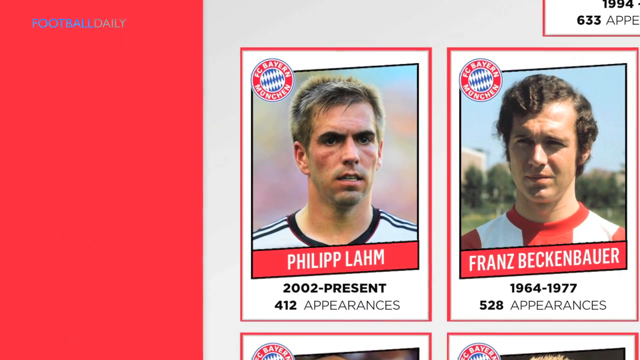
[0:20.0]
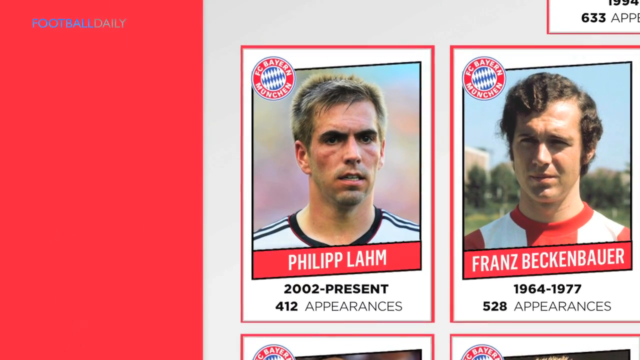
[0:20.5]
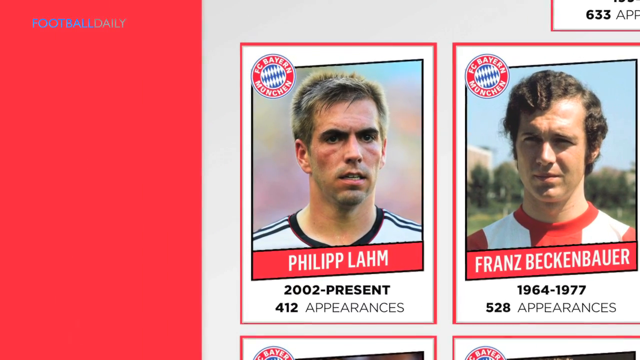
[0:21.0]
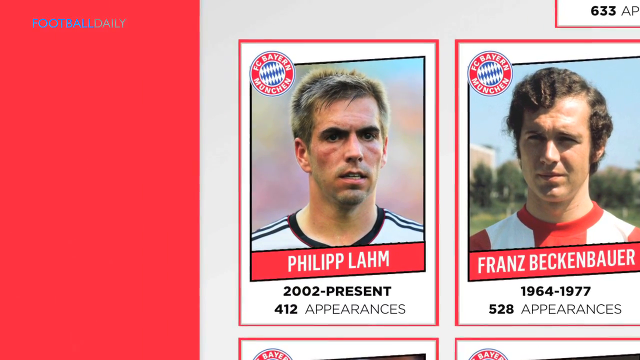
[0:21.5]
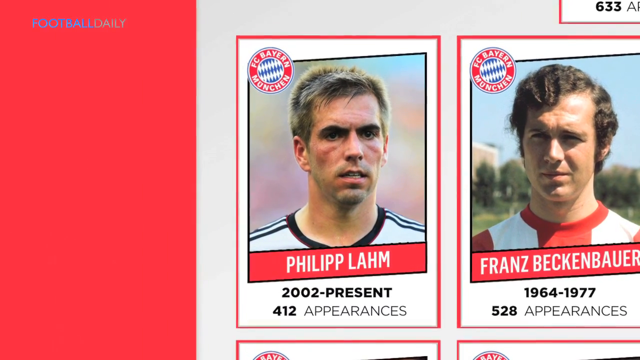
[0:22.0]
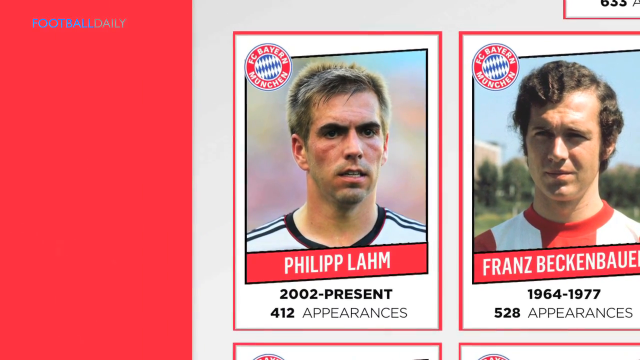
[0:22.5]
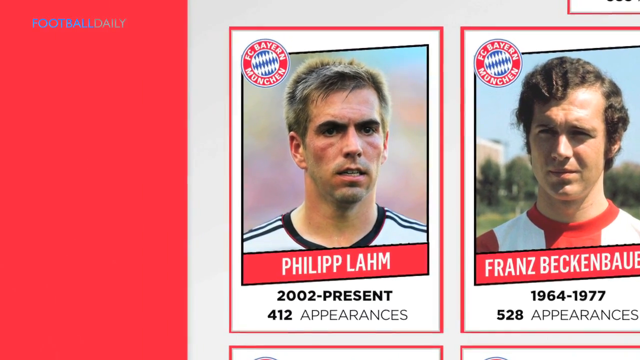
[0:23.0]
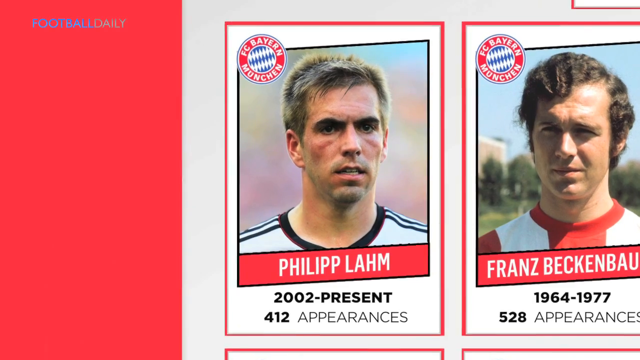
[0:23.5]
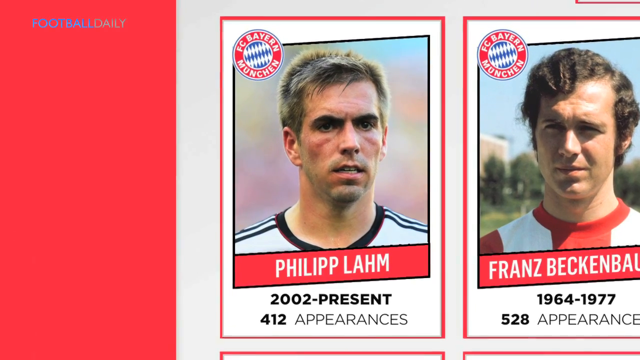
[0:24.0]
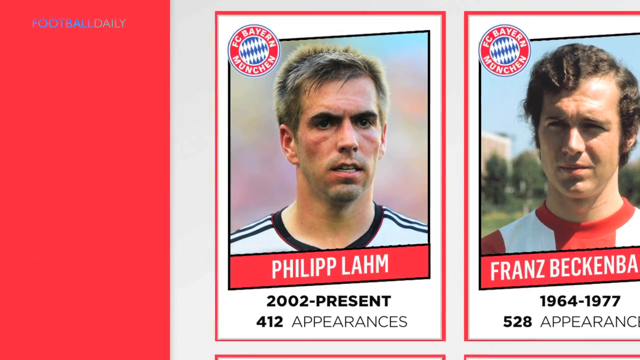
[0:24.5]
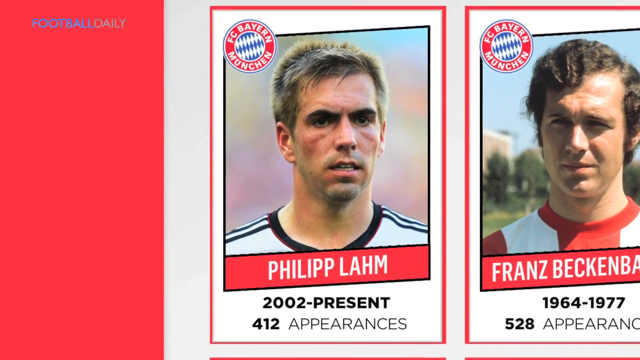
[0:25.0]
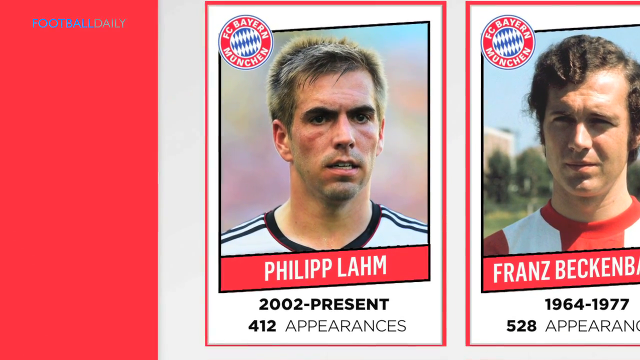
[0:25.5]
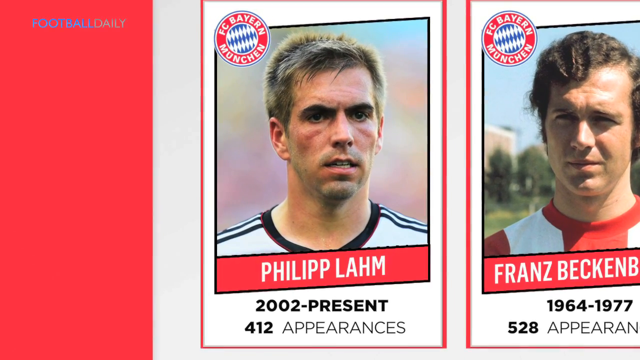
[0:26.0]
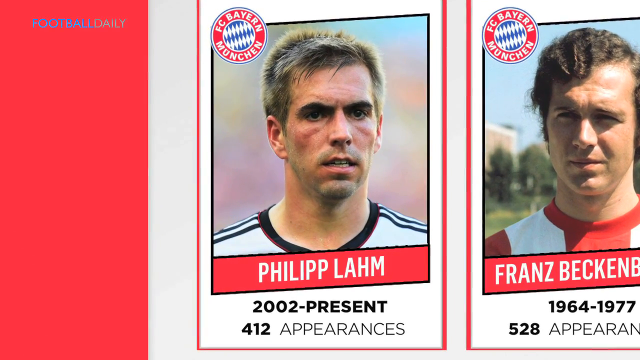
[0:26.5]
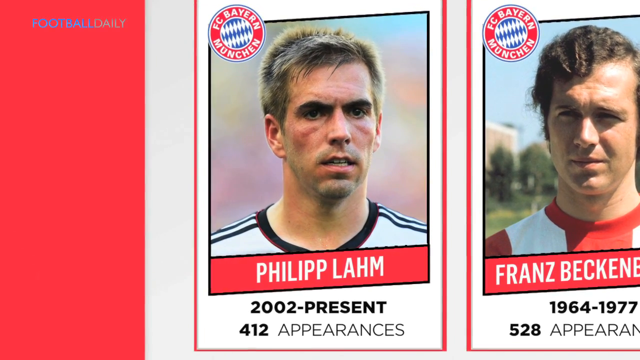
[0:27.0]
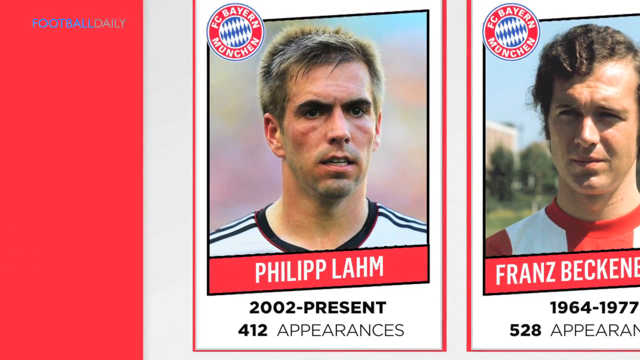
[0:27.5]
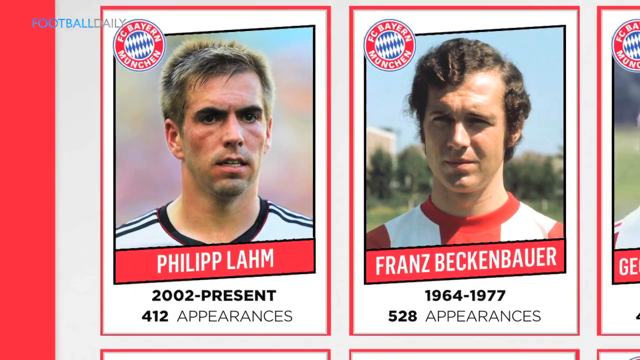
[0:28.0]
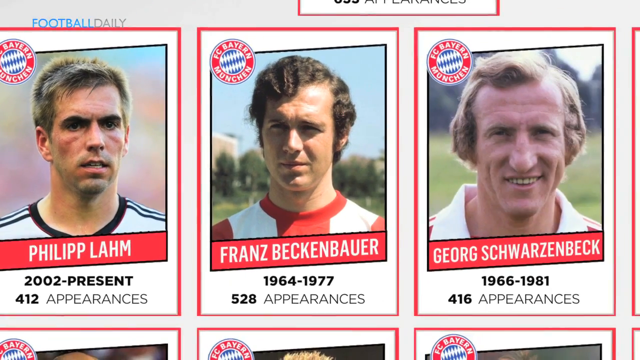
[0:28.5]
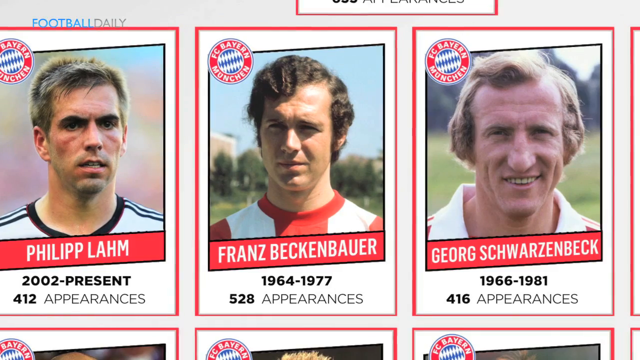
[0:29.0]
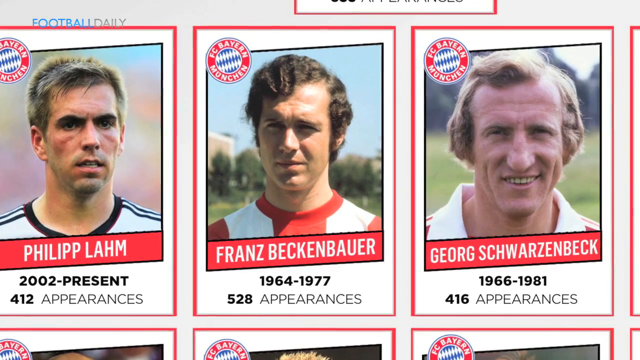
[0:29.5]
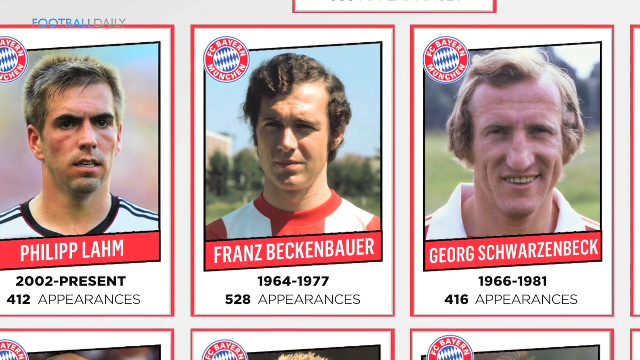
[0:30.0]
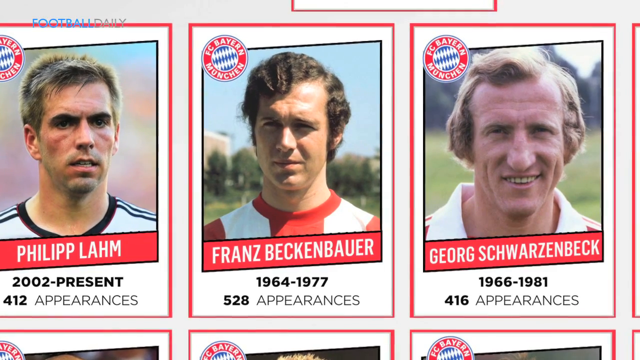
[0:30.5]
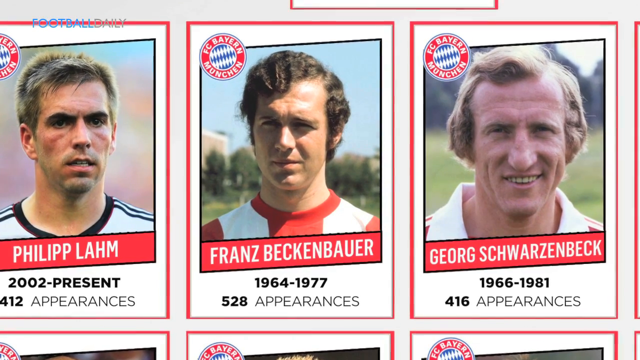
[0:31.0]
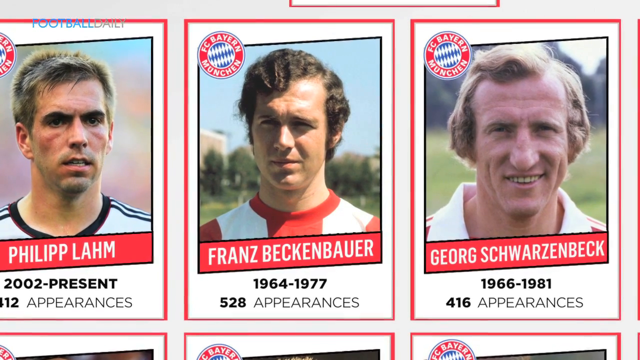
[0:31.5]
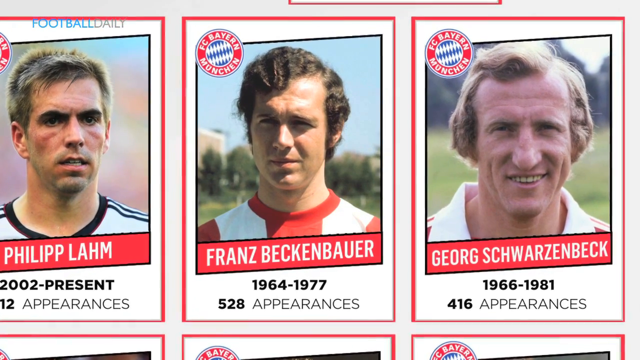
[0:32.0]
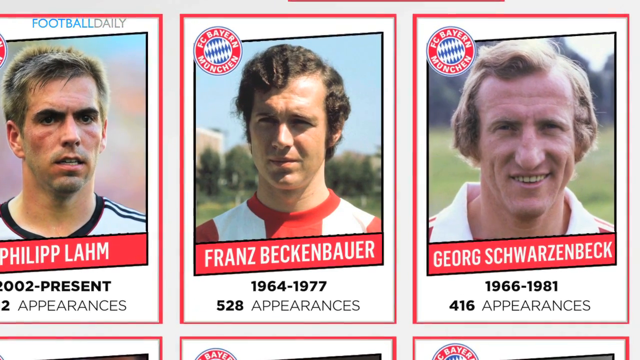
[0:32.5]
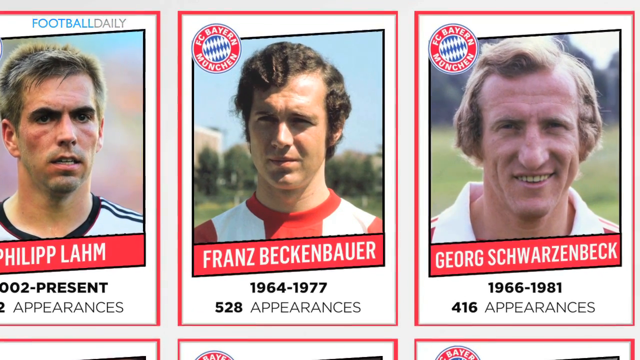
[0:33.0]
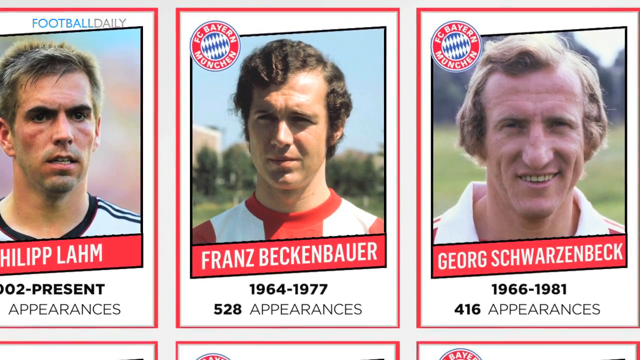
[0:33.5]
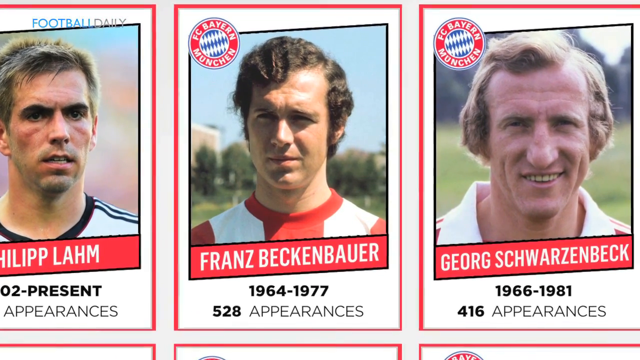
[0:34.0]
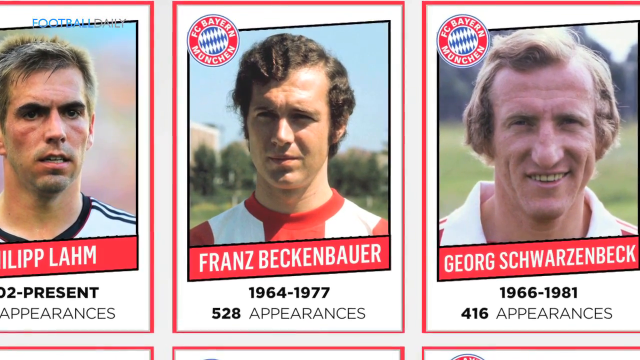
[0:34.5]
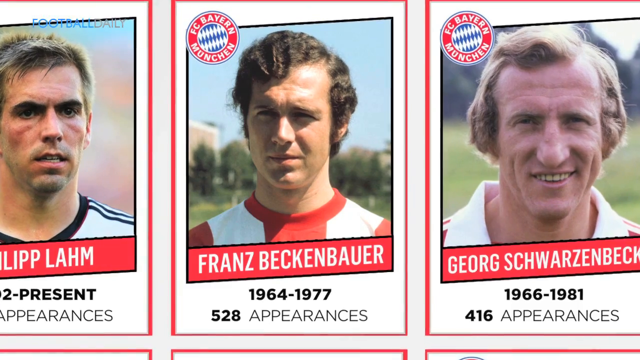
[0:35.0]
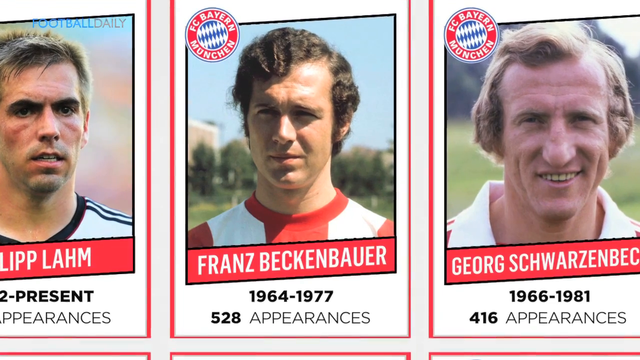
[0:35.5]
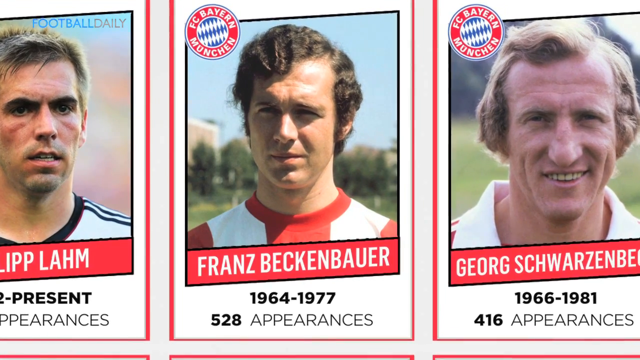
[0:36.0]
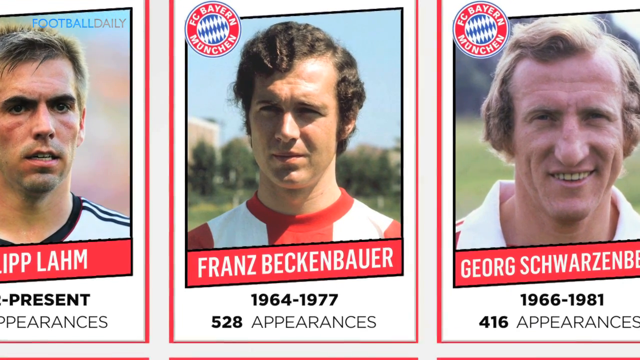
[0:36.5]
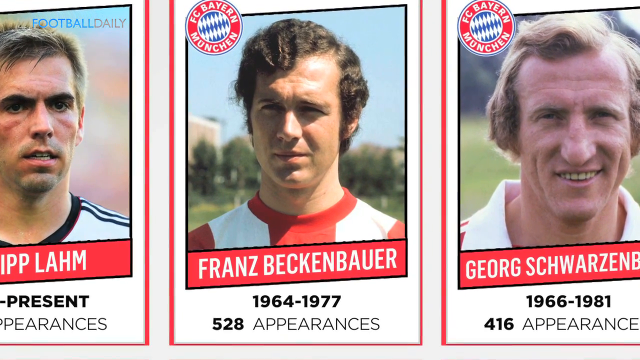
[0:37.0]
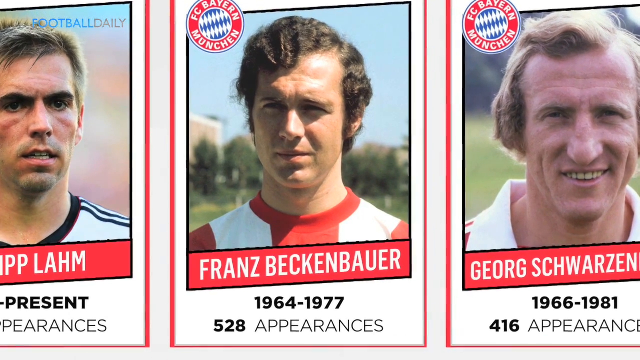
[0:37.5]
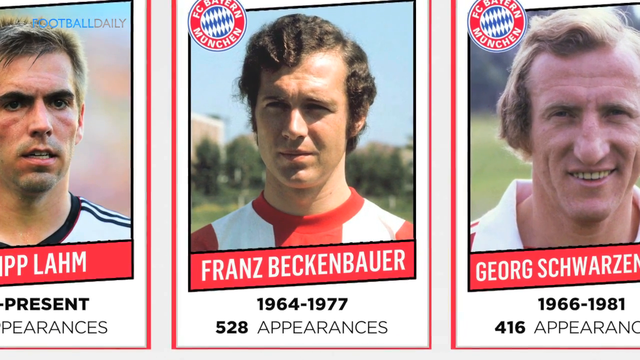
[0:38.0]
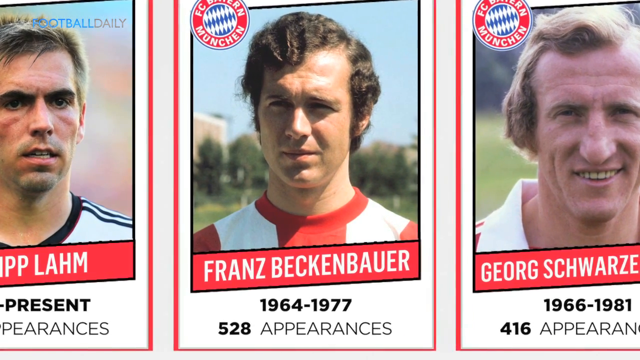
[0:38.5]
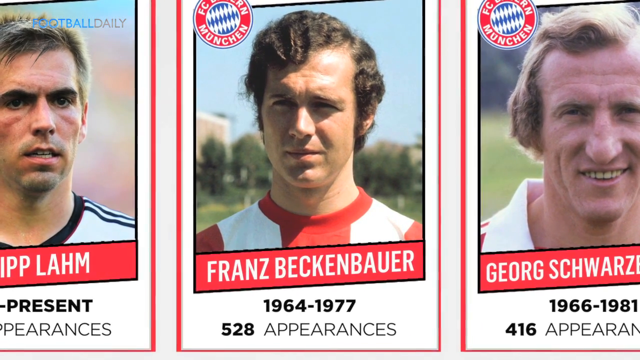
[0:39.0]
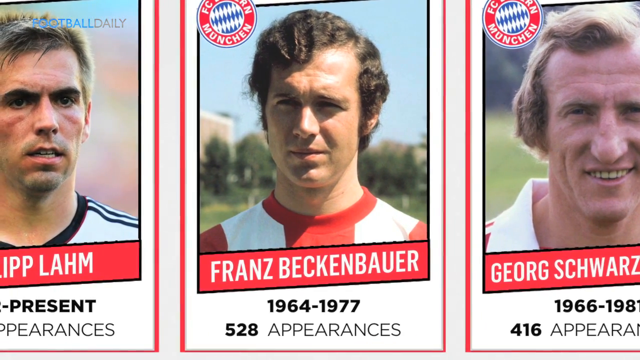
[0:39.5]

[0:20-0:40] More players listed on the image are shown; it is like a collage with each player's name and face. The top row holds only one person. The first person in the second row is "PHILIPP LAHM", "2002-present", "412 appearances". Next is "FRANZ BECKENBAUER", "1964-1977", "528 appearances". The view zooms in on Lahm, which also takes in the player beside him, then moves down to the next one, "GEORG SCHWARZENBECK", "1966-1981", "416 appearances". It then zooms in on the player in the middle, which also takes in the other two, cutting off their faces.